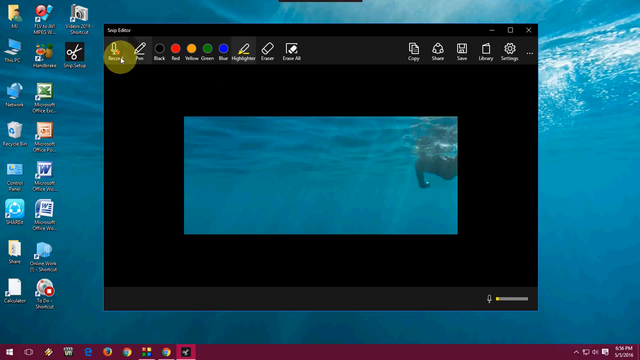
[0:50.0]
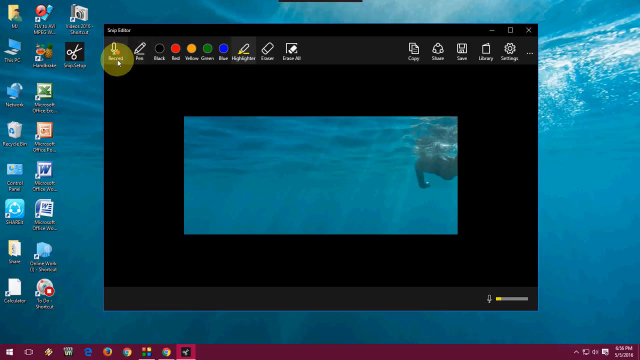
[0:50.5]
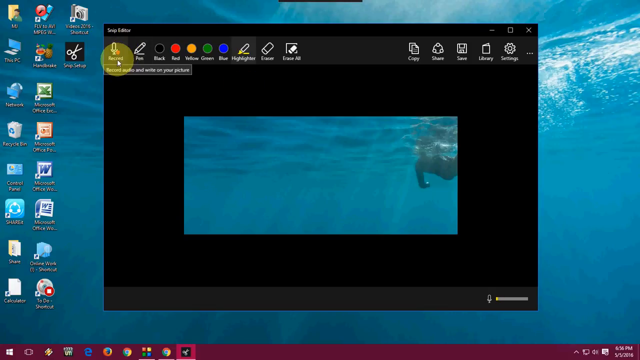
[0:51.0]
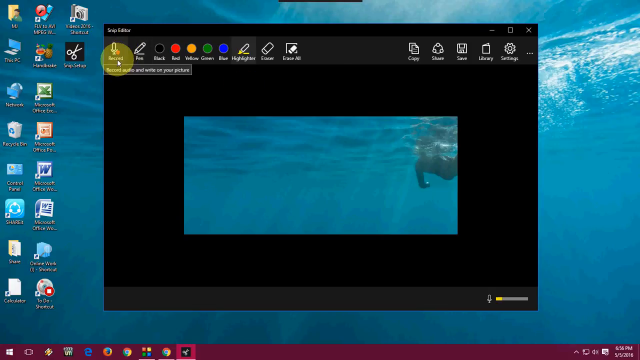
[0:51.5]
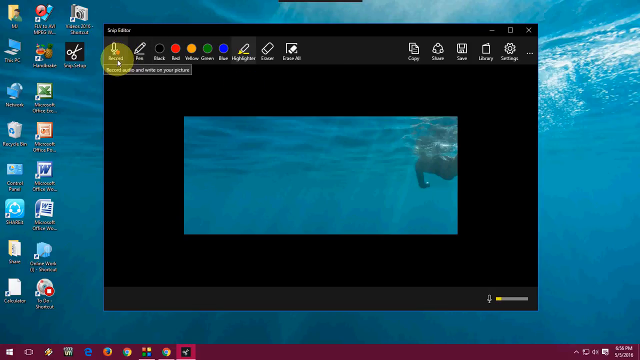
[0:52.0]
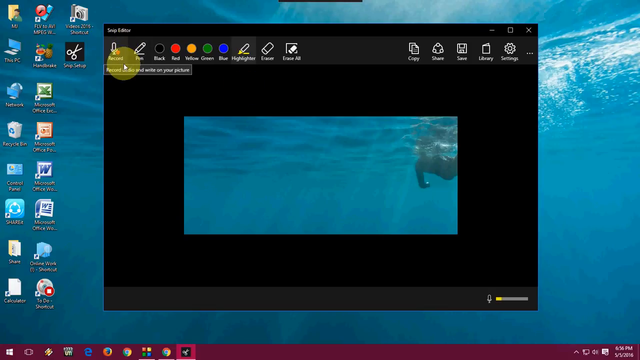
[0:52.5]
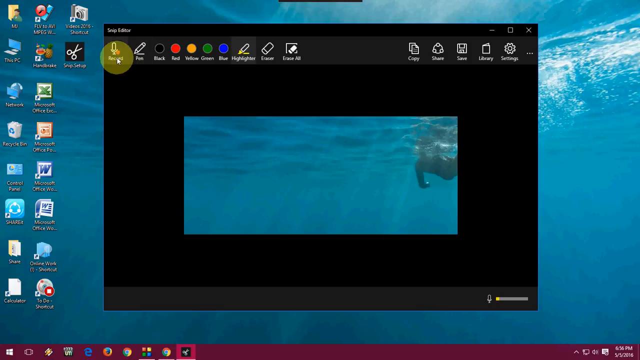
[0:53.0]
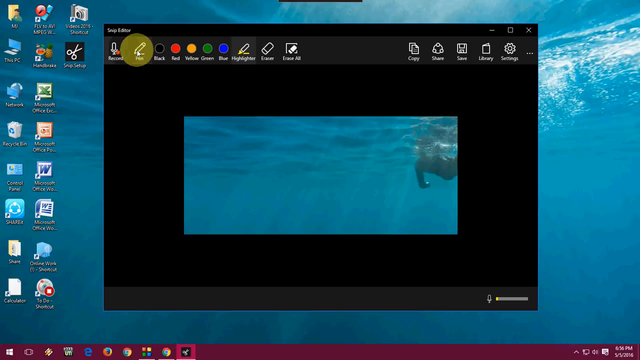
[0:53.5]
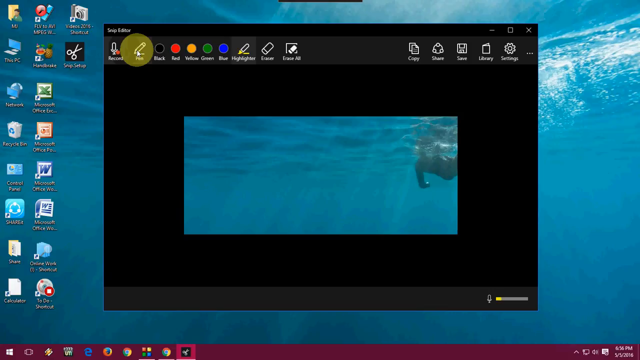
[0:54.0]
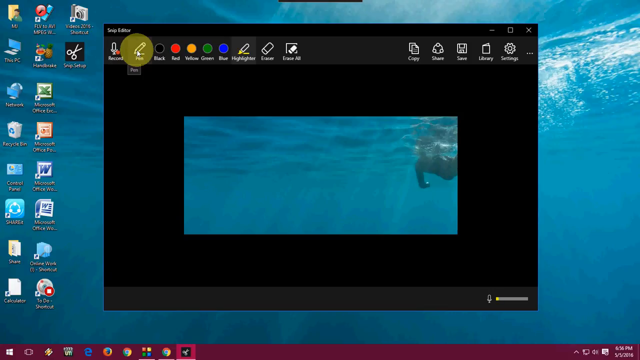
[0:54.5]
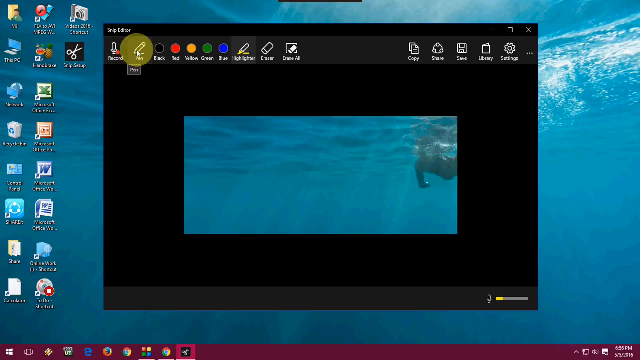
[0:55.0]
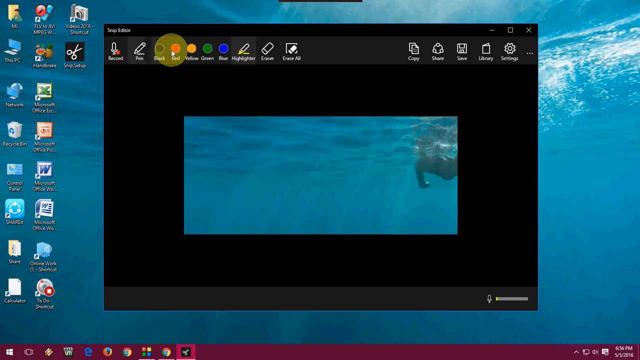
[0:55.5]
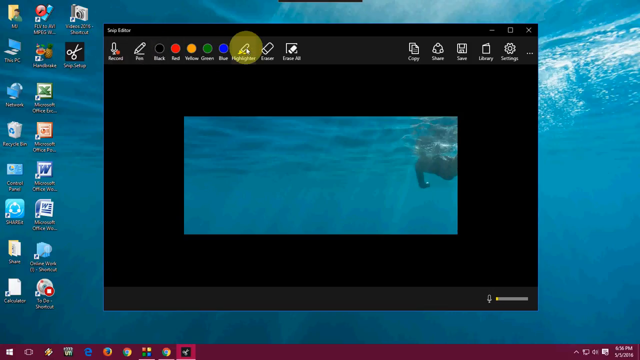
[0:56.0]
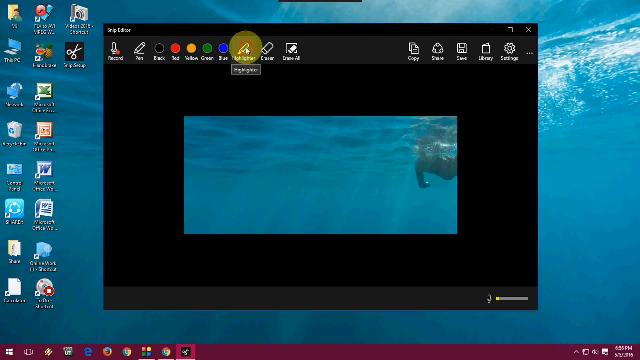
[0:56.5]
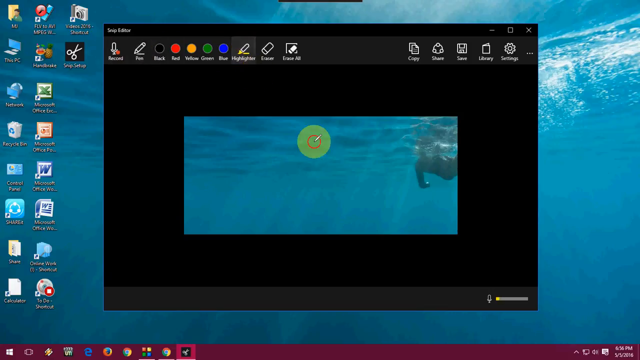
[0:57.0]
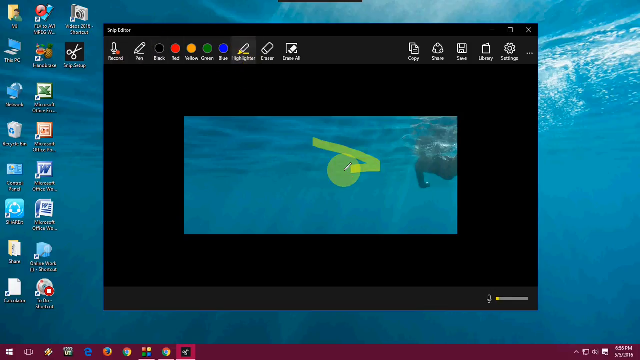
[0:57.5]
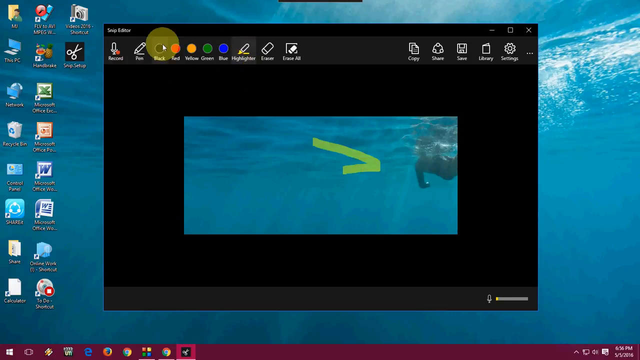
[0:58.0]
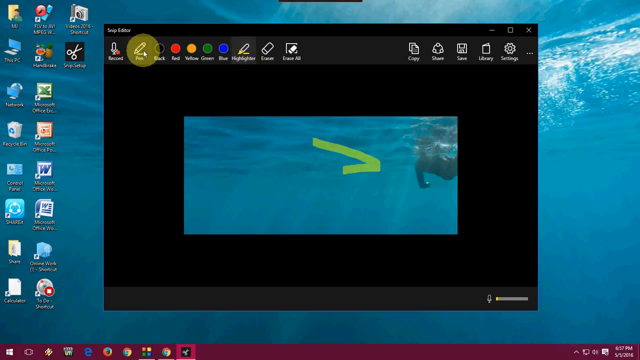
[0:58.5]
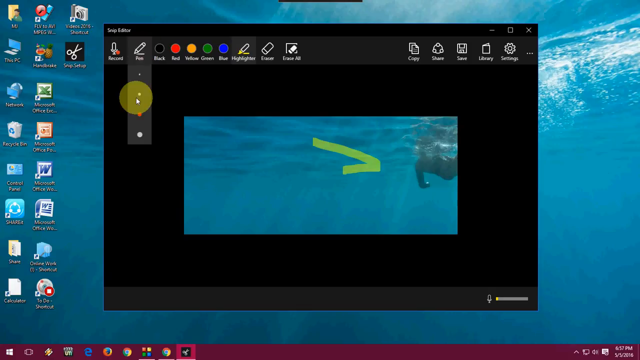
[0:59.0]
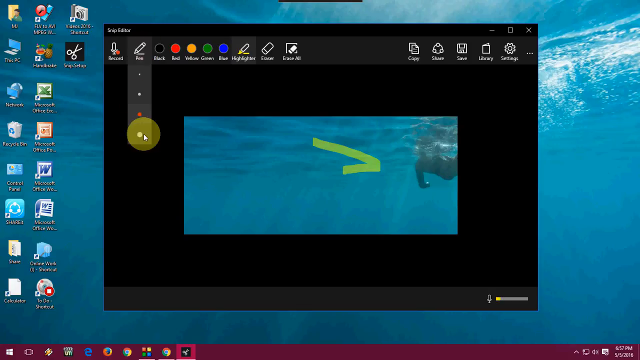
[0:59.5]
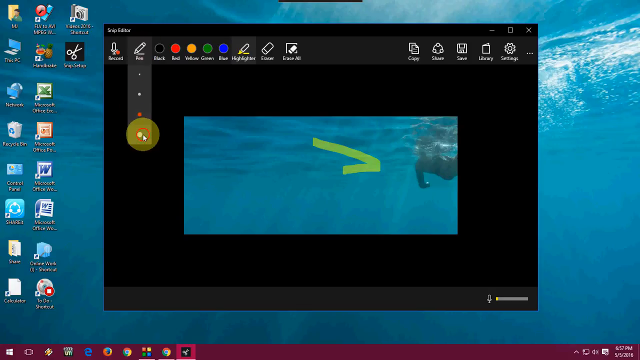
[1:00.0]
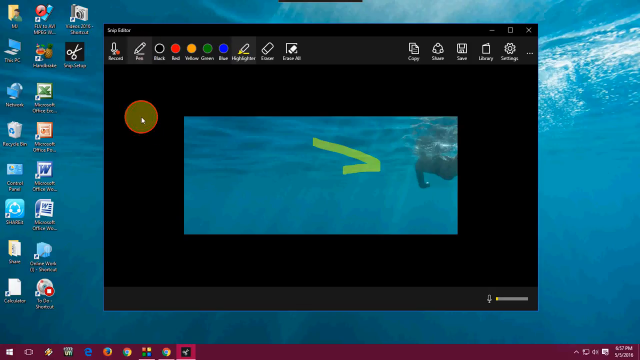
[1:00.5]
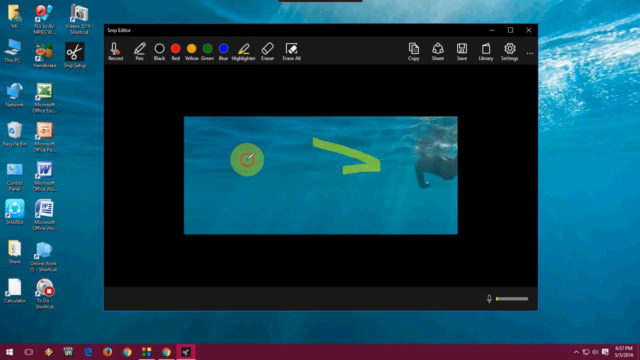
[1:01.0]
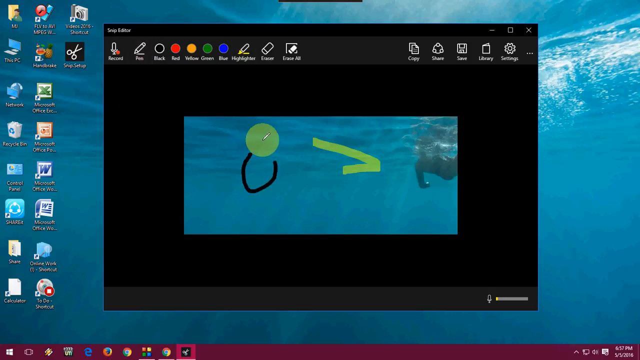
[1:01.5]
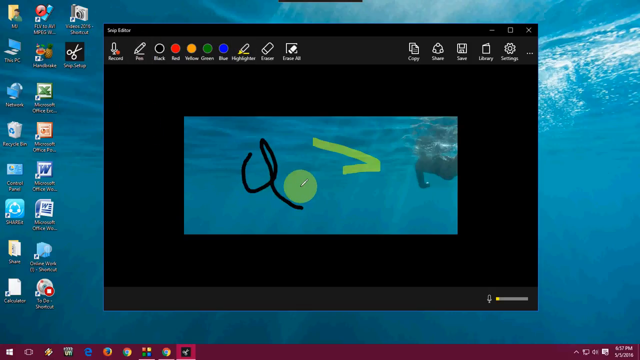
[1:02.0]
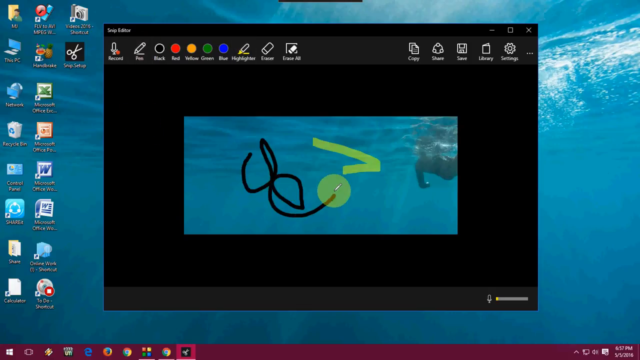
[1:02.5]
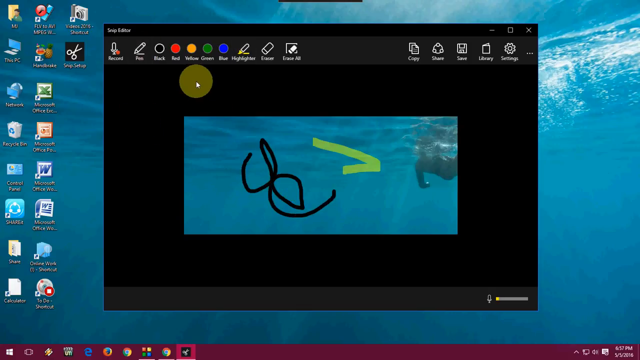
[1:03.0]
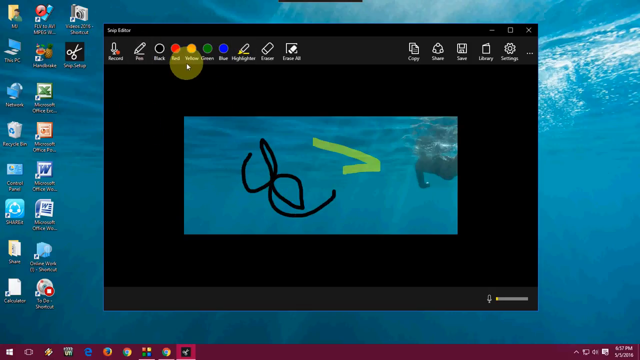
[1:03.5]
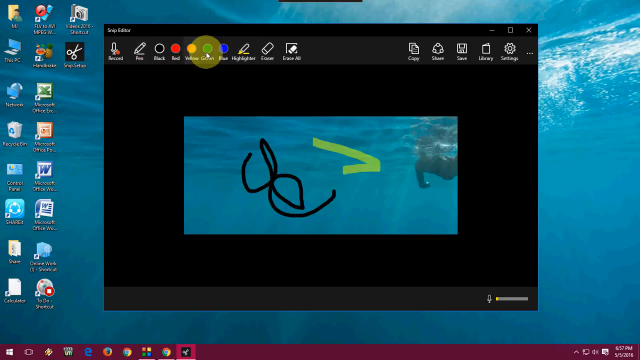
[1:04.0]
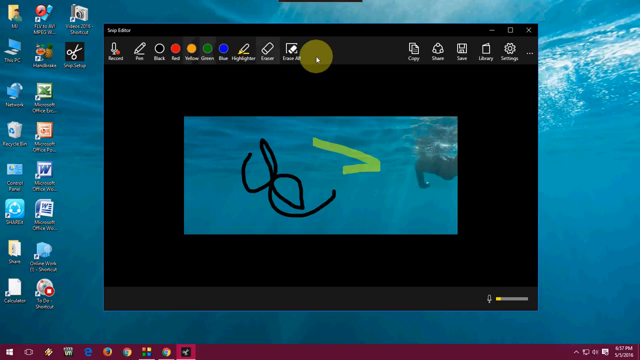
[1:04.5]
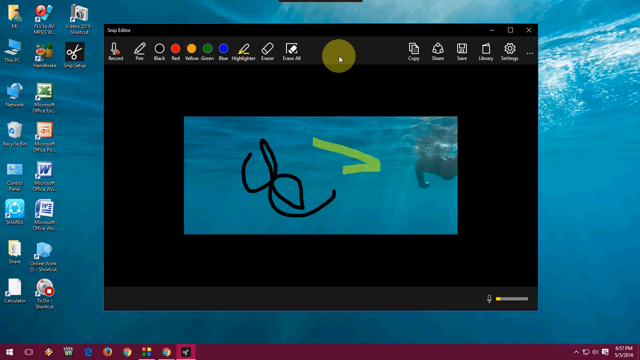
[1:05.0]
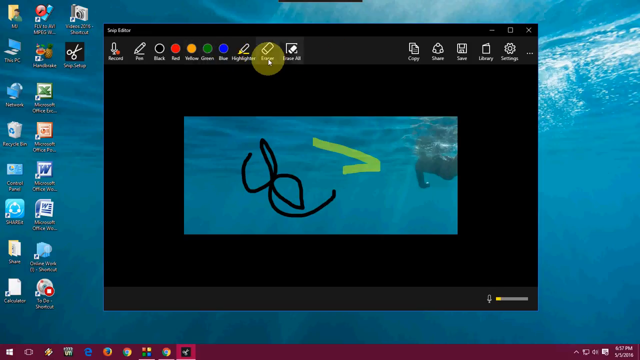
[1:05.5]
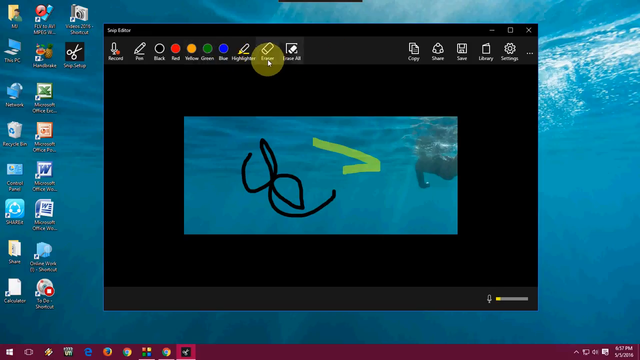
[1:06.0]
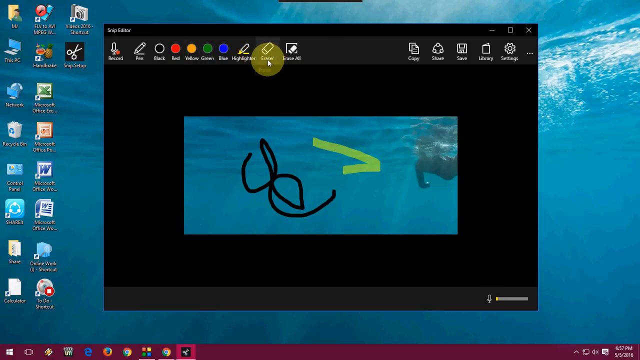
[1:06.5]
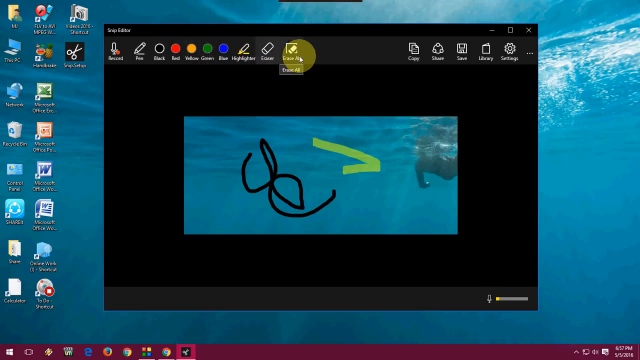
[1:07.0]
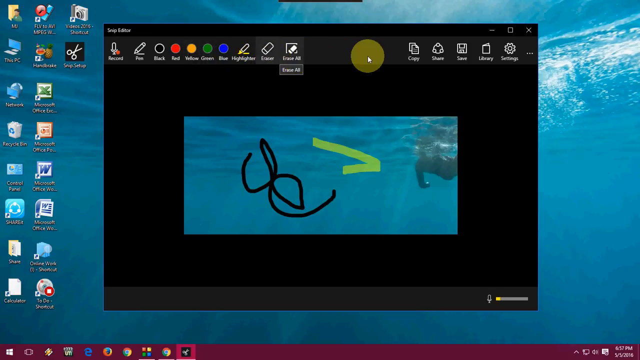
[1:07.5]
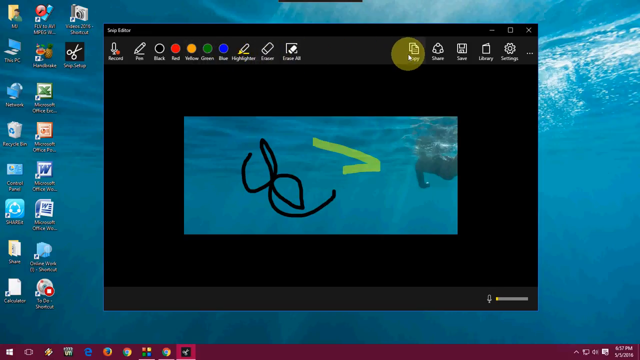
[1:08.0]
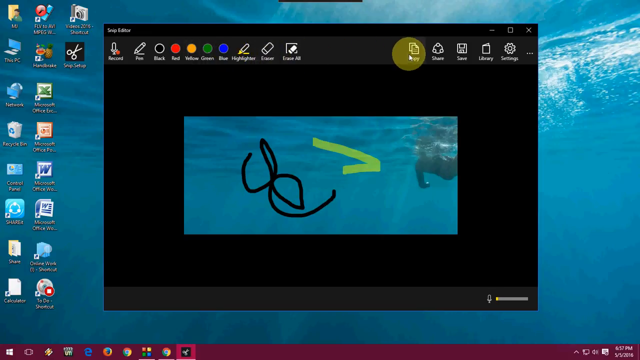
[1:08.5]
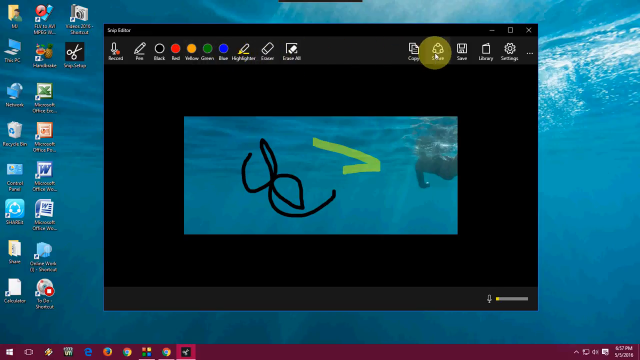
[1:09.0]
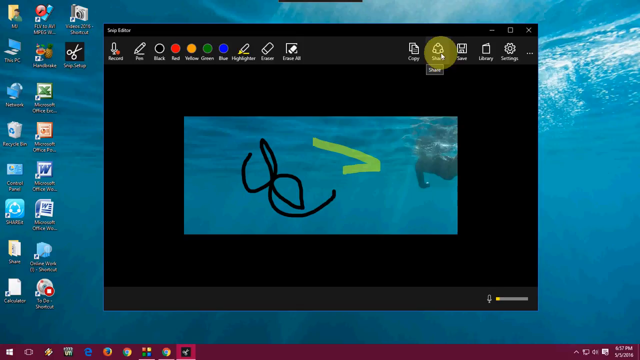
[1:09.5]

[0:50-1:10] The editing screen of the Snipping Office Tool app is shown, with its options: colors in red, black, yellow, green and blue, a pencil, an eraser, a copy button, a share option, an option to save the file in a different format, and a gallery button for viewing other images.